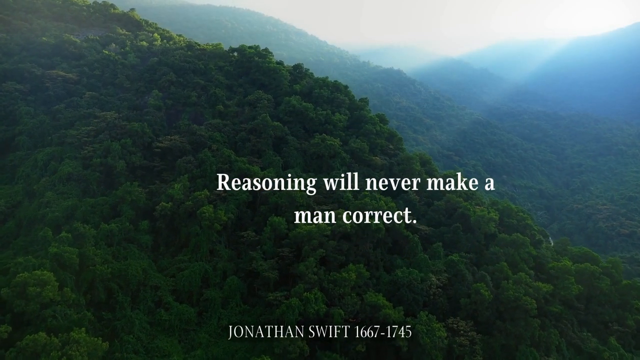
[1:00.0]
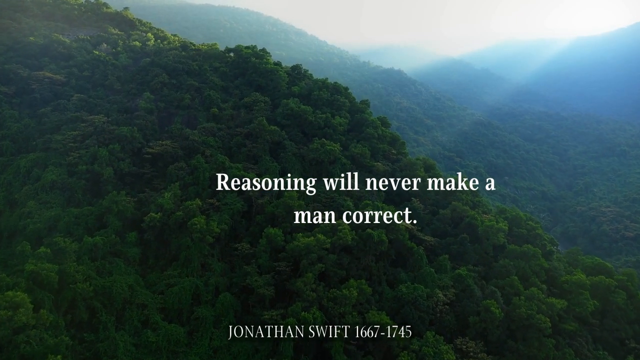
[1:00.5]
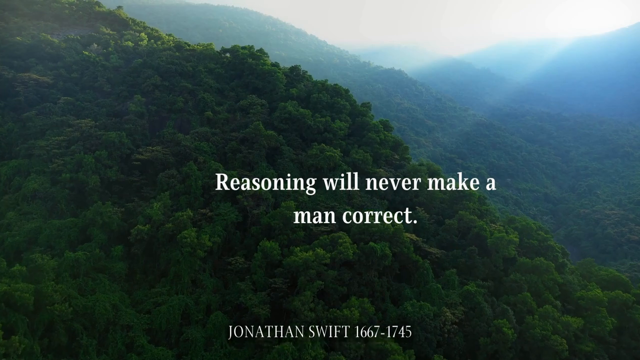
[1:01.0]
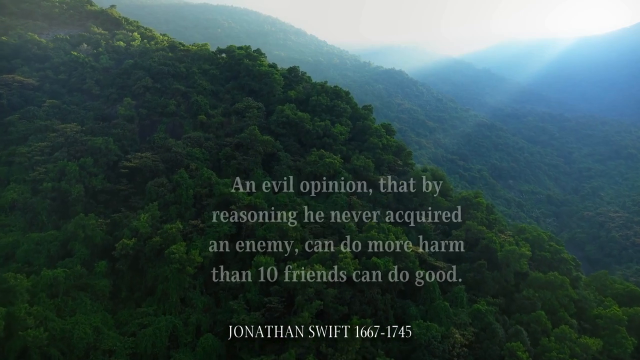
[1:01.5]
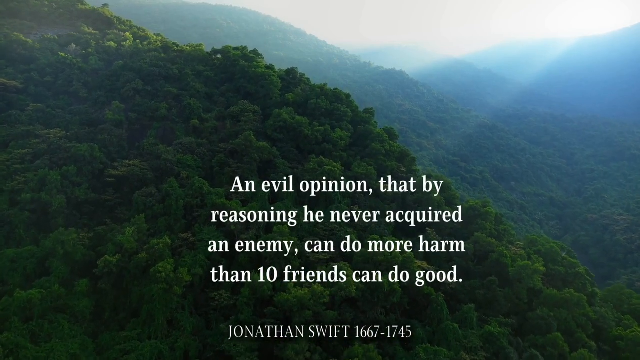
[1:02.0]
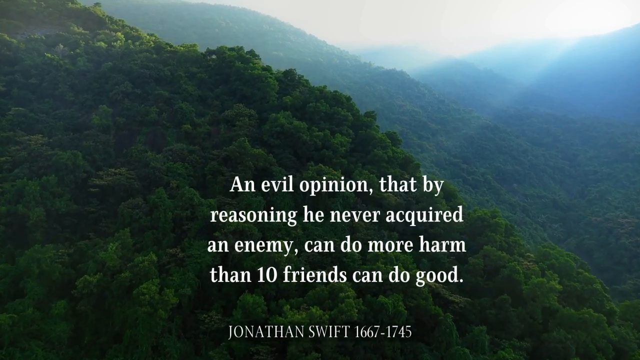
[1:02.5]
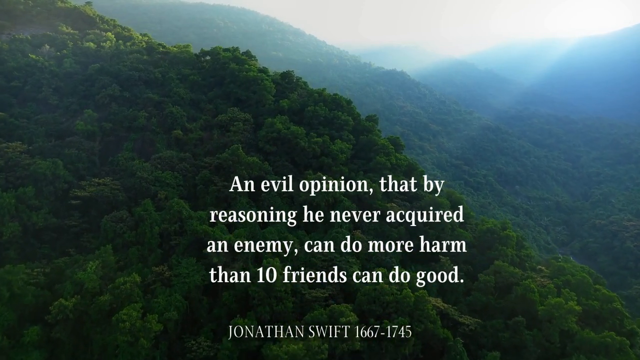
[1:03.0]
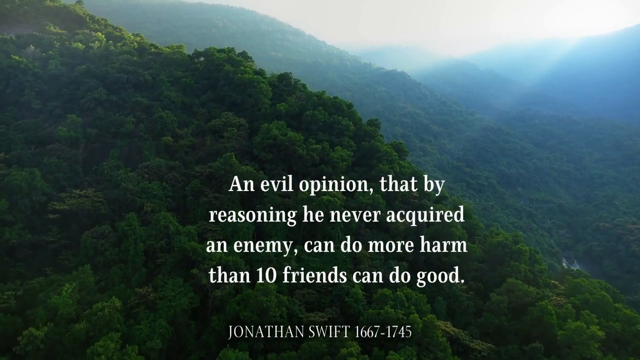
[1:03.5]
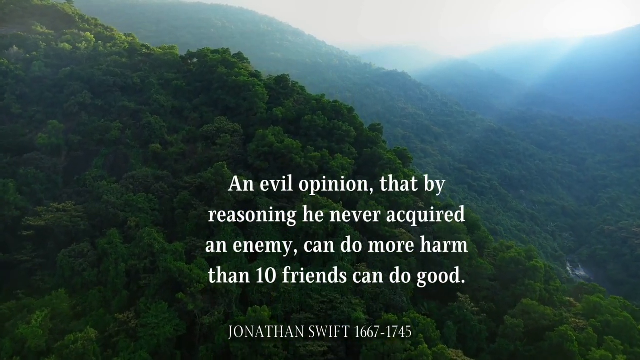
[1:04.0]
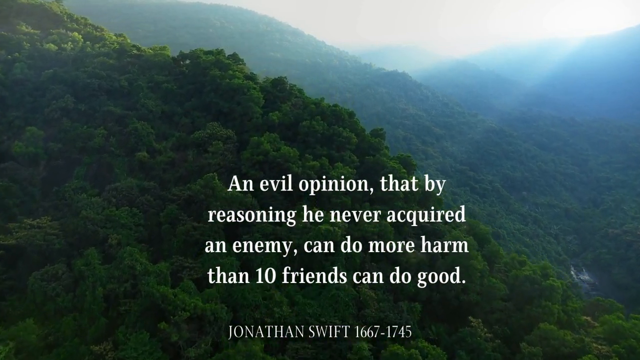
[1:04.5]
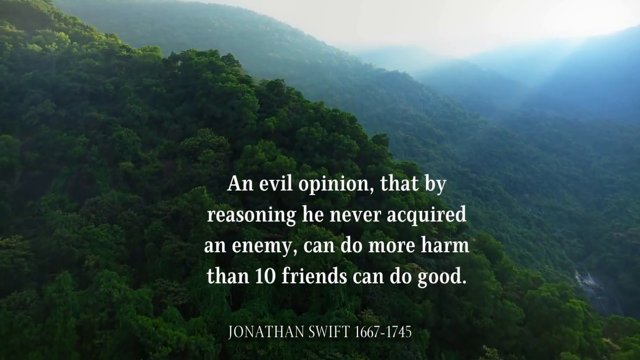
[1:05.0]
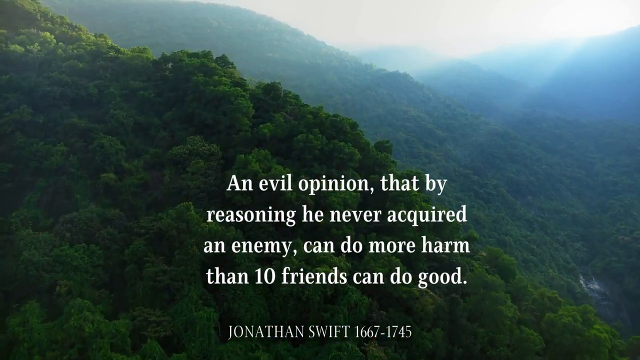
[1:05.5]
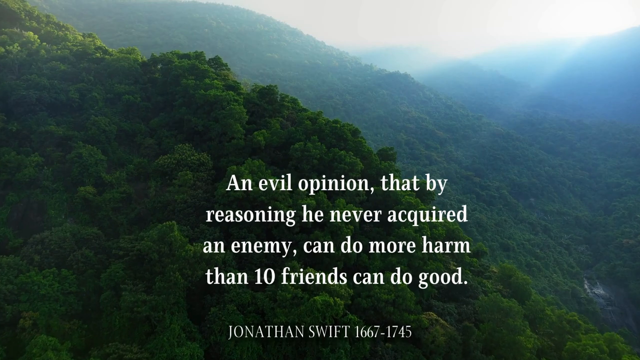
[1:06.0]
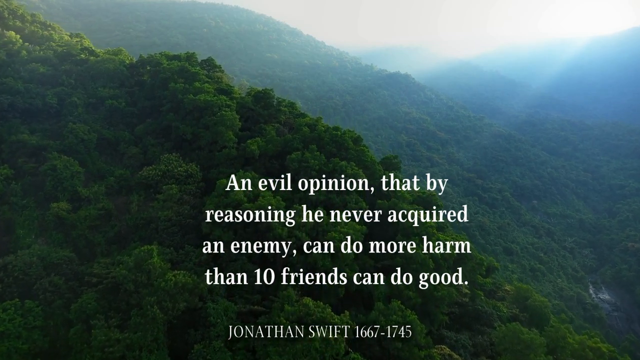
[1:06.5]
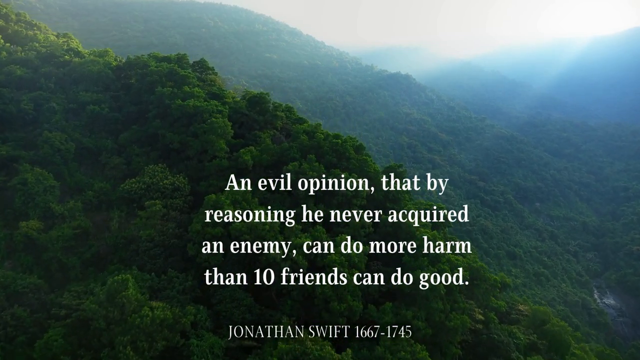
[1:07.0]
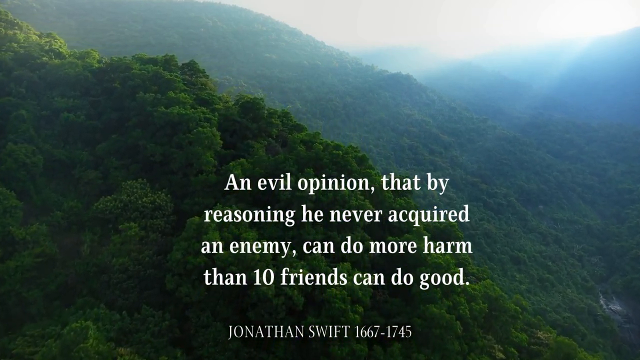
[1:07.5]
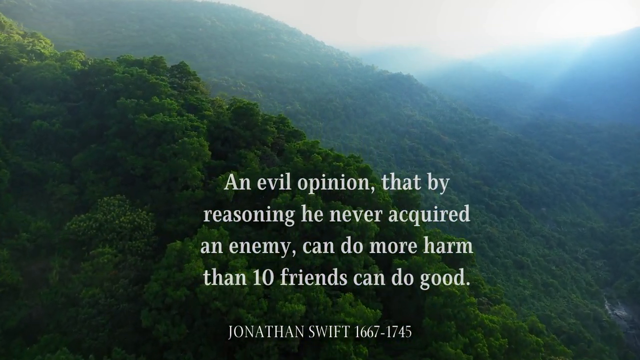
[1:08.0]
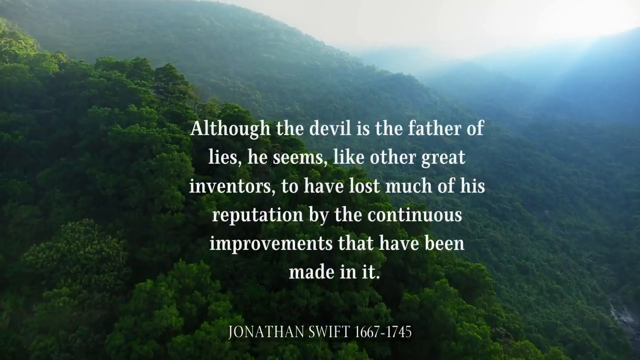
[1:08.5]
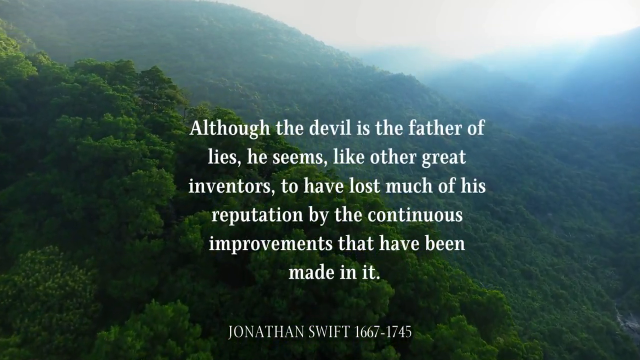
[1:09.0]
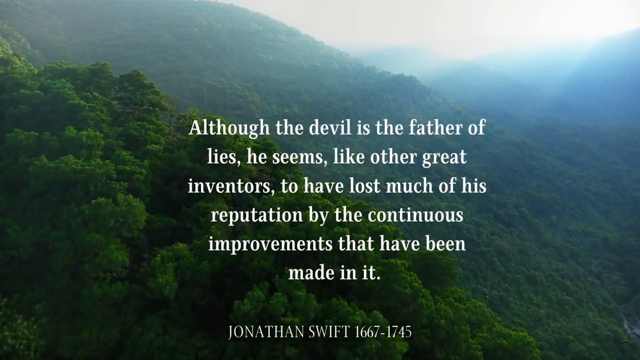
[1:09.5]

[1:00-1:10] A mountainous forest, like a Hawaii- or Fiji-type tropical forest on a mountain, with a hazy blue background and the sun shining through. White text in the center of the screen reads "reasoning will never make a man correct," with "Jonathan Swift, 1667 to 1745" at the bottom. The text disappears and a new block of text in the center reads "an evil opinion, that by reasoning, he never acquired an enemy, can do more harm than 10 friends can do good." That text stays for a few seconds while the camera moves into the hill like a drone going forward. A new block of text then reads "although the devil is the father of lies, he seems like other great inventors to have lost much of his reputation by the continuous improvements that have been made in it." The camera continues to pan, and that text goes away.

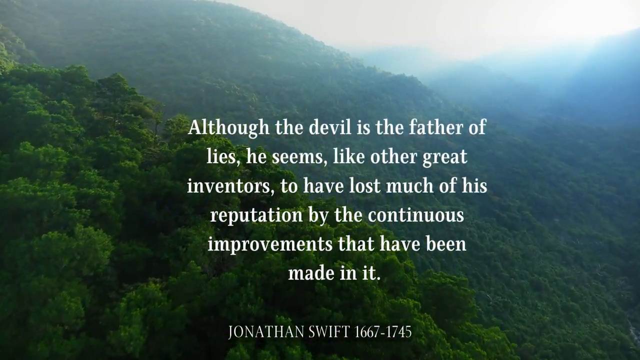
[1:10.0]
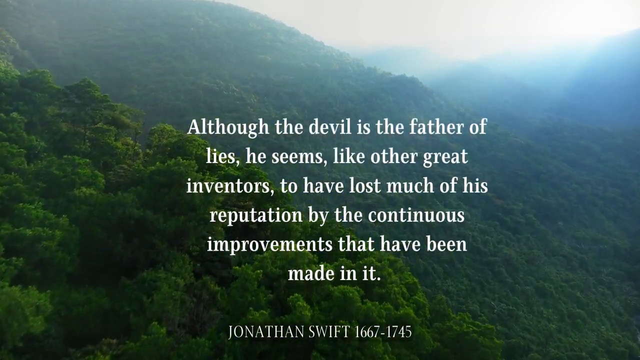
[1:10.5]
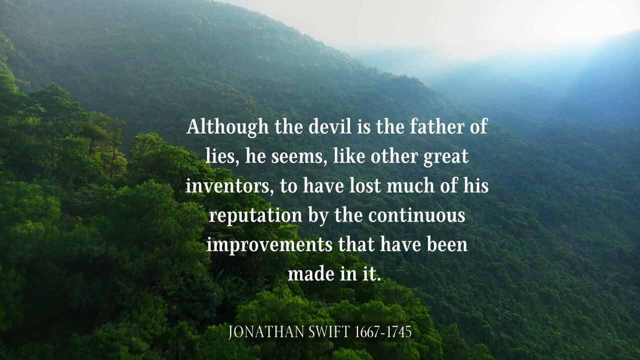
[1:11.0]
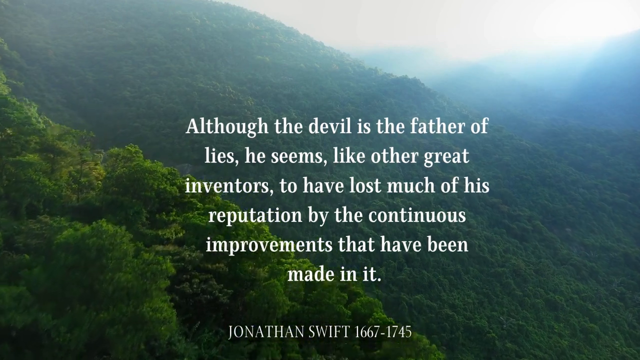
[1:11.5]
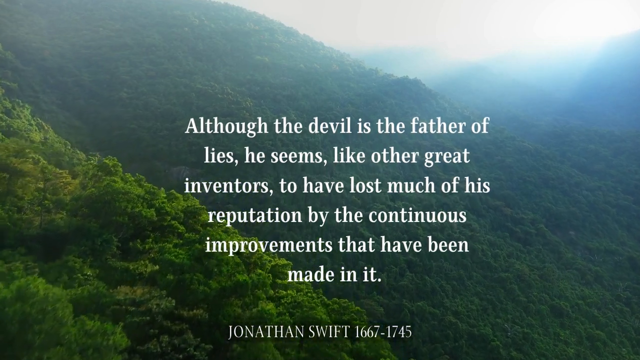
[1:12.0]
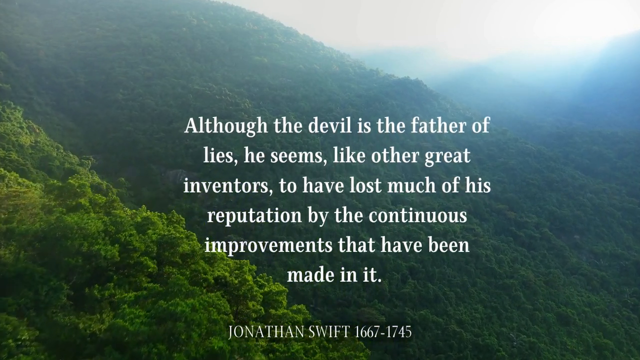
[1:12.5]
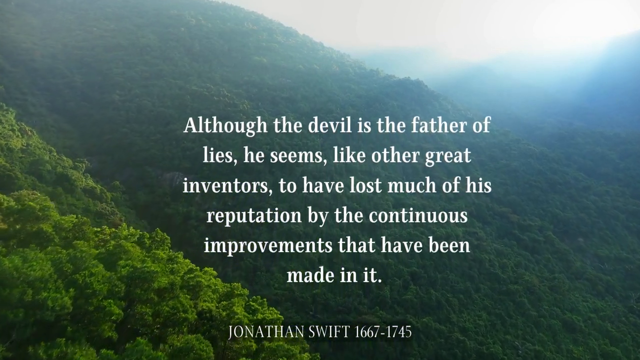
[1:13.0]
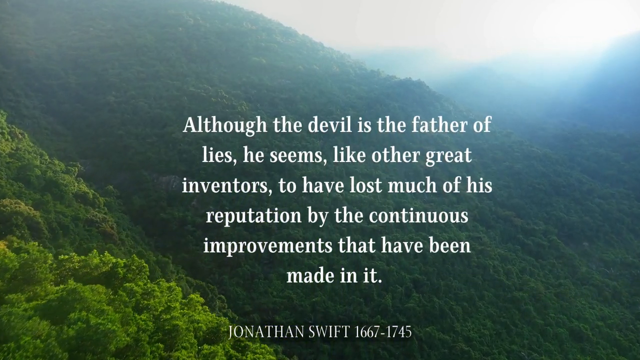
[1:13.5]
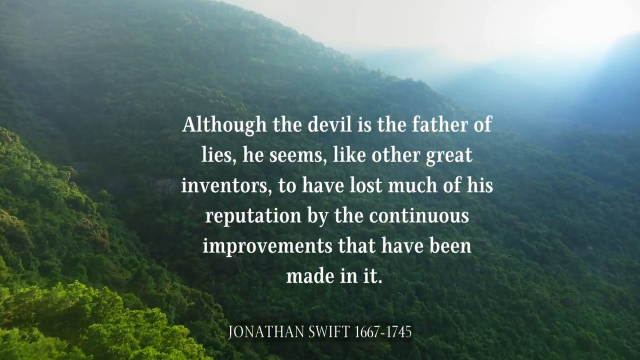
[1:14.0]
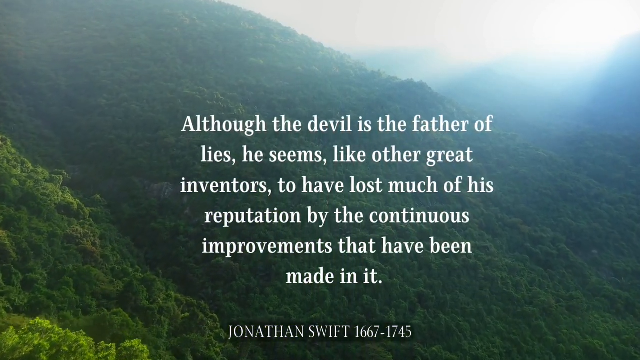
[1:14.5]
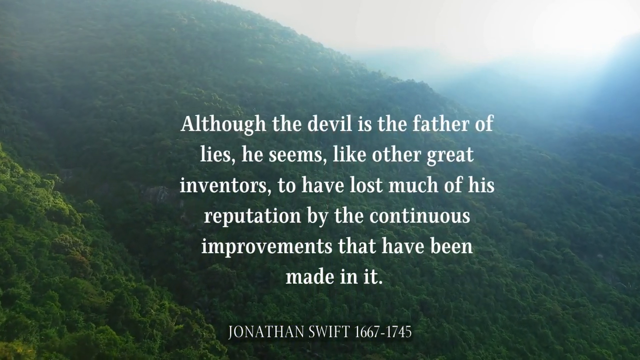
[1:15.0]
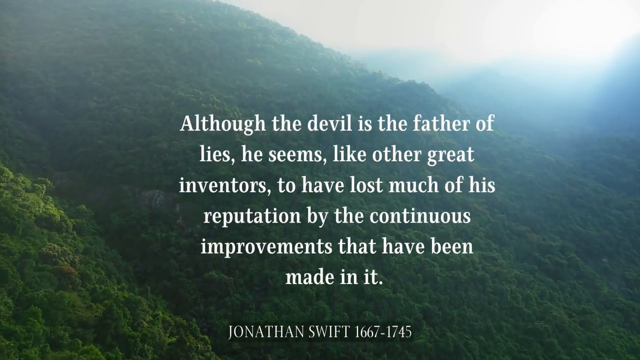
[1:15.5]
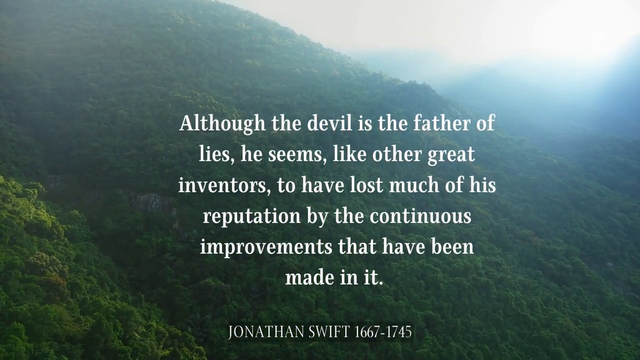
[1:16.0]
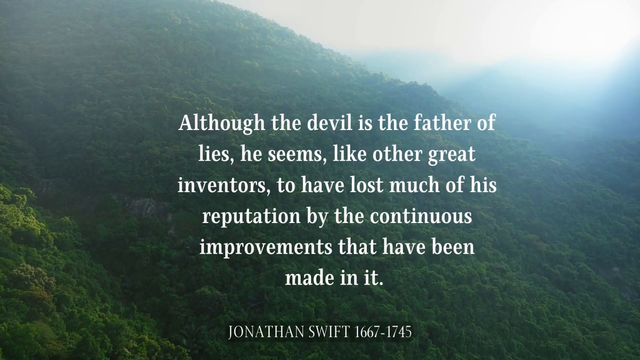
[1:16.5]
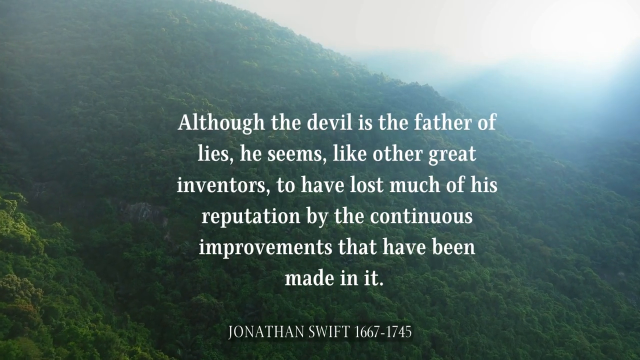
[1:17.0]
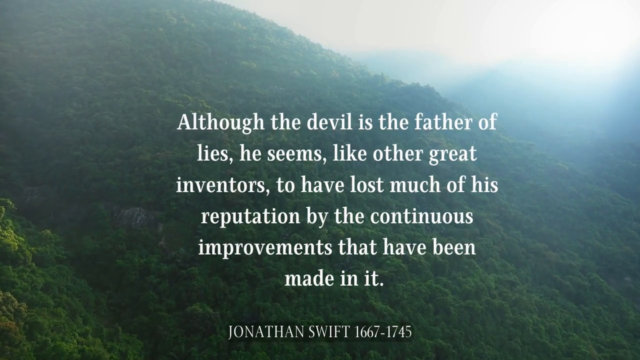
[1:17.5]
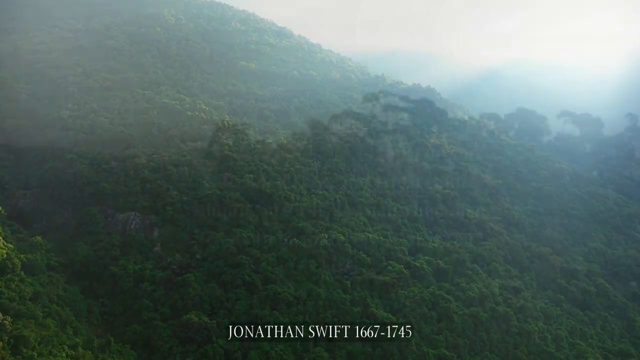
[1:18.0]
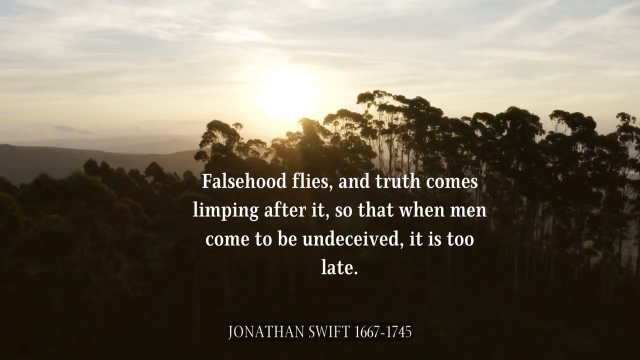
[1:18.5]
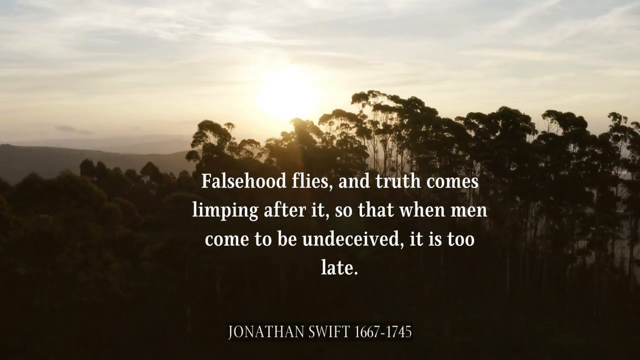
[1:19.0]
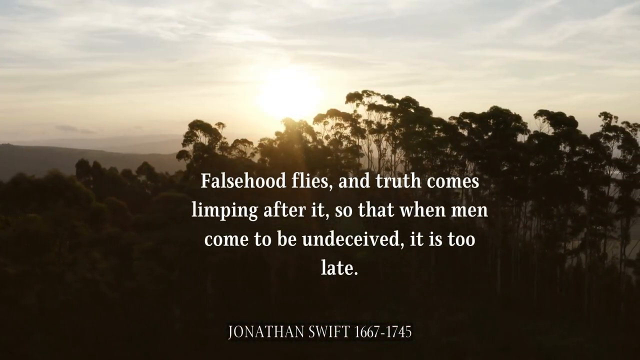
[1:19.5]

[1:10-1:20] Tropical mountains like Hawaii or Fiji, with very green, lush forest going up steep, mountainous hills and a hazy blue background with light coming through some clouds. A block of white text reads "although the devil is the father of lies, he seems like other great inventors to have lost much of his reputation by the continuous improvements that have been made in it," with "Jonathan Swift, 1667 to 1745" at the bottom. The camera pans forward through the mountain like a drone, and the text disappears. The setting changes to taller trees, not quite pine trees, with most of the leaves up at the top. It is more like evening, with the sun setting in the background, and the view shows a sparser group of trees instead of the lush hill and clouds. New text reads "falsehood flies, and truth comes limping after it, so that when men come to be undeceived, it is too late."